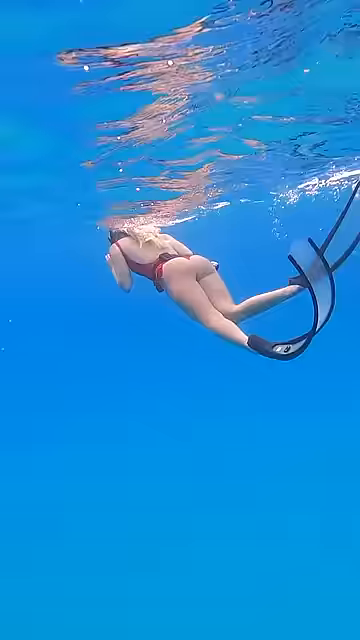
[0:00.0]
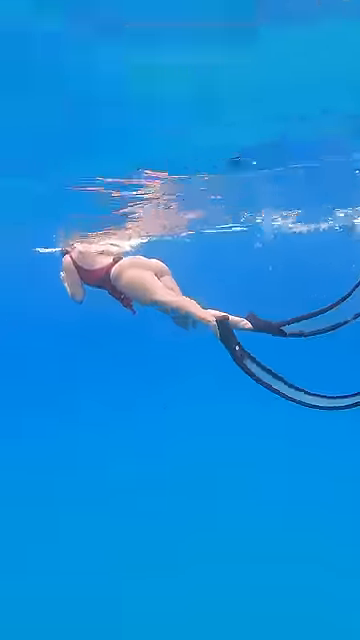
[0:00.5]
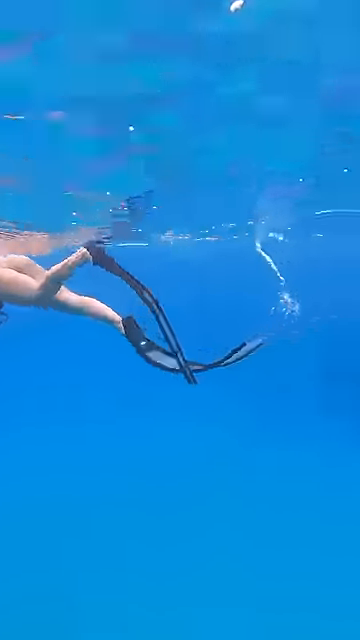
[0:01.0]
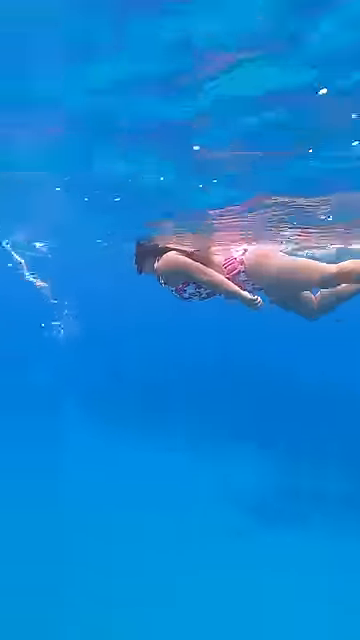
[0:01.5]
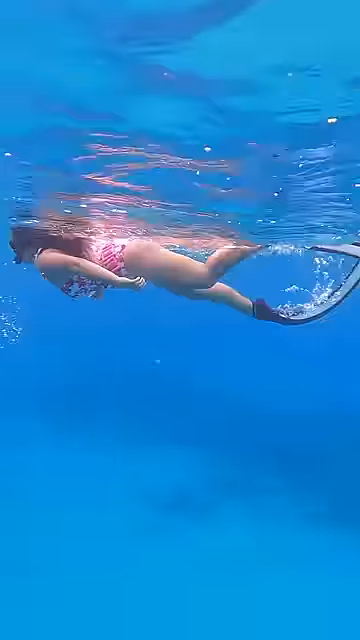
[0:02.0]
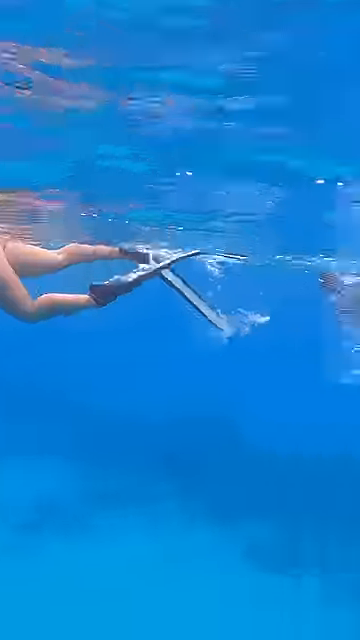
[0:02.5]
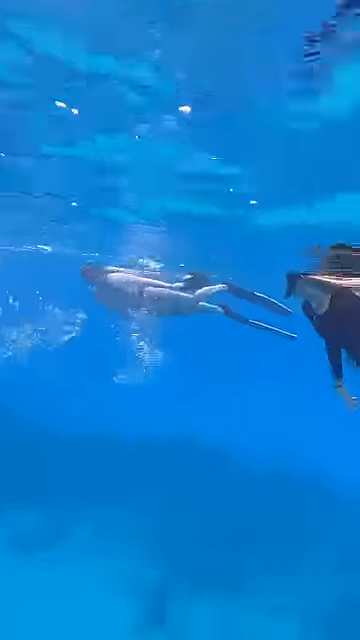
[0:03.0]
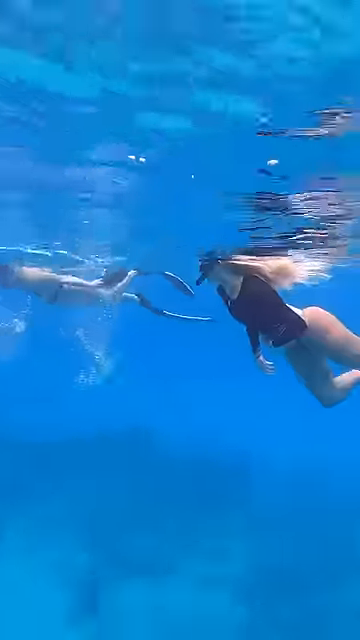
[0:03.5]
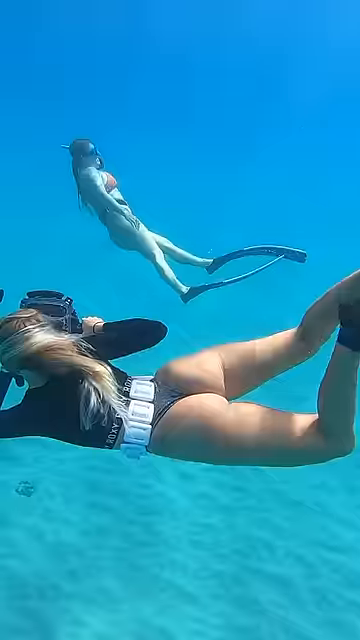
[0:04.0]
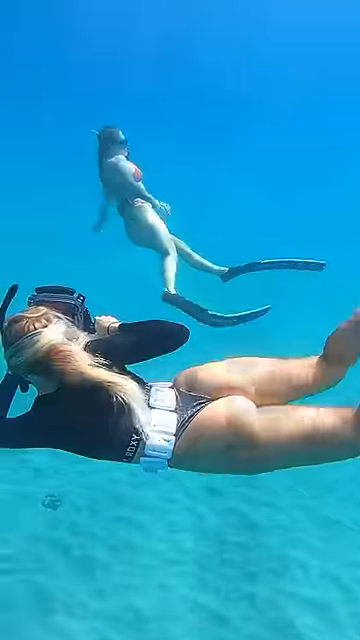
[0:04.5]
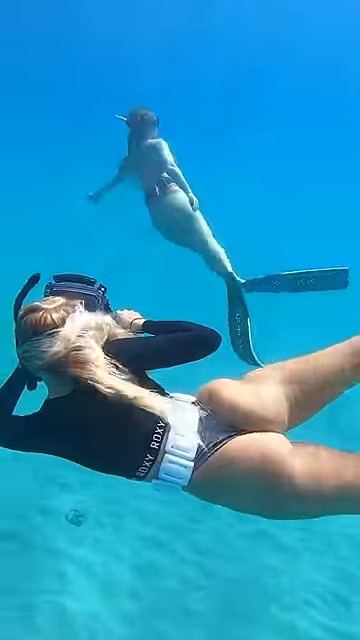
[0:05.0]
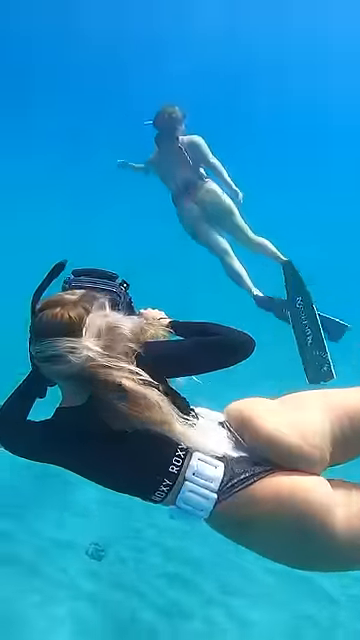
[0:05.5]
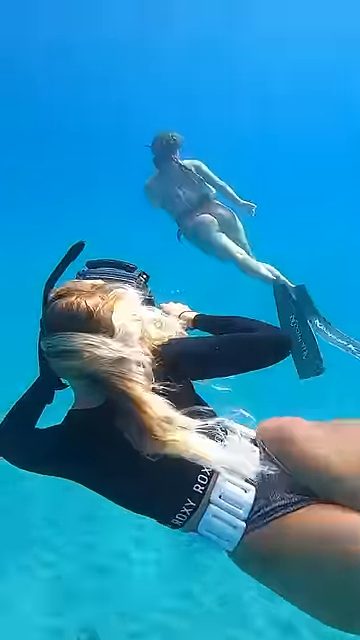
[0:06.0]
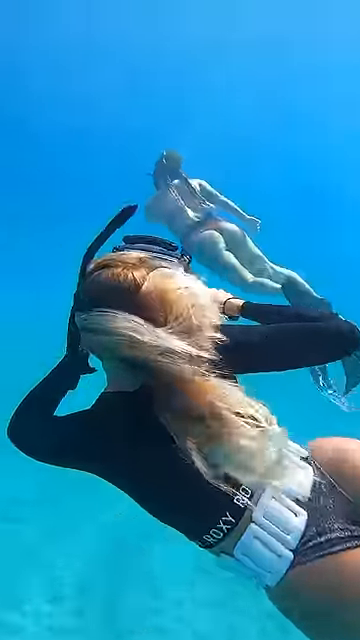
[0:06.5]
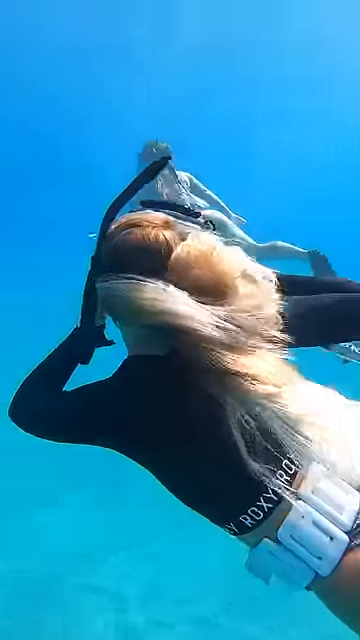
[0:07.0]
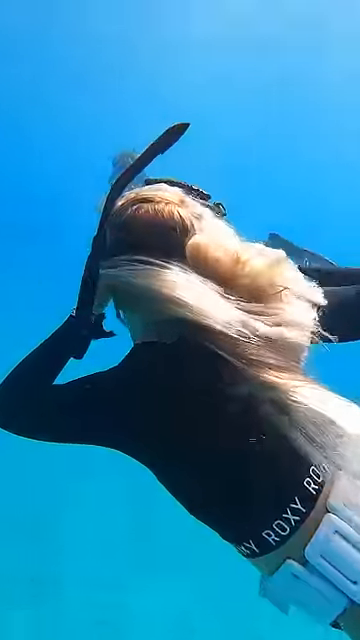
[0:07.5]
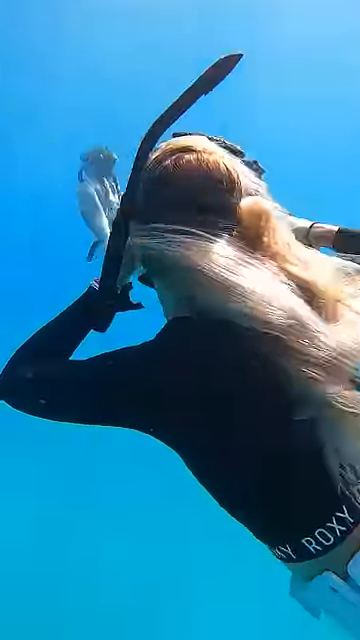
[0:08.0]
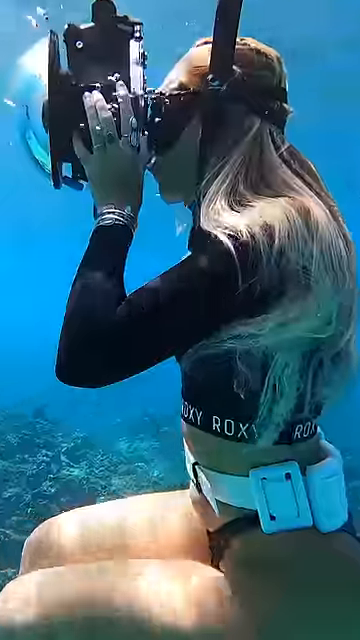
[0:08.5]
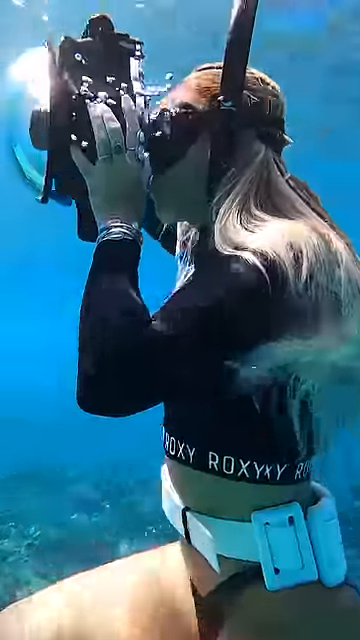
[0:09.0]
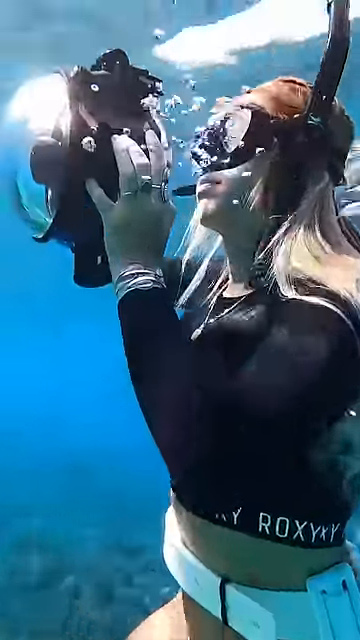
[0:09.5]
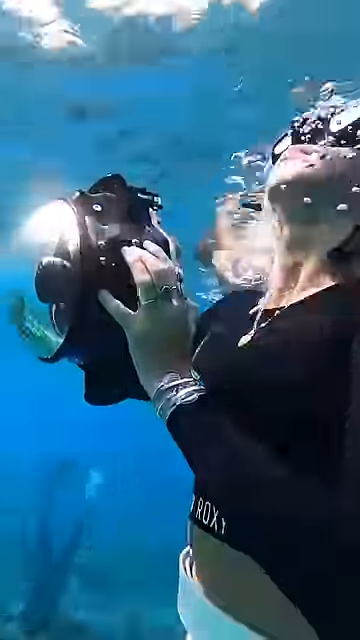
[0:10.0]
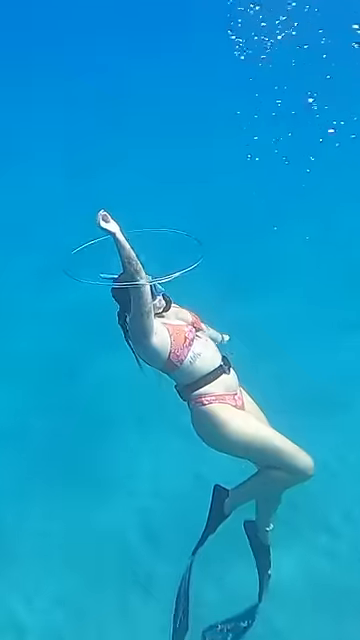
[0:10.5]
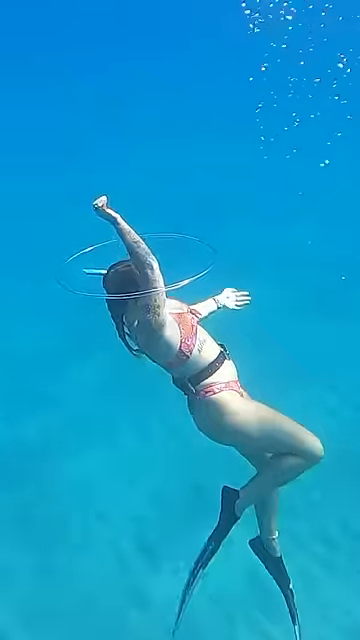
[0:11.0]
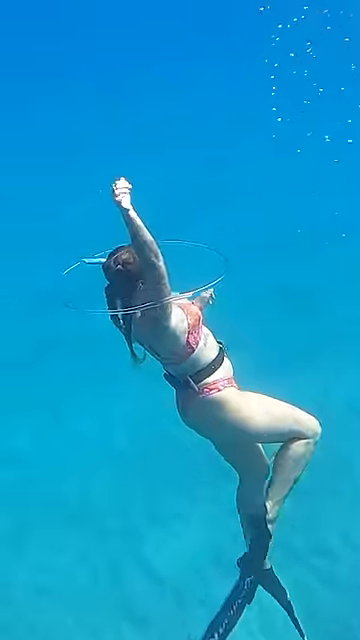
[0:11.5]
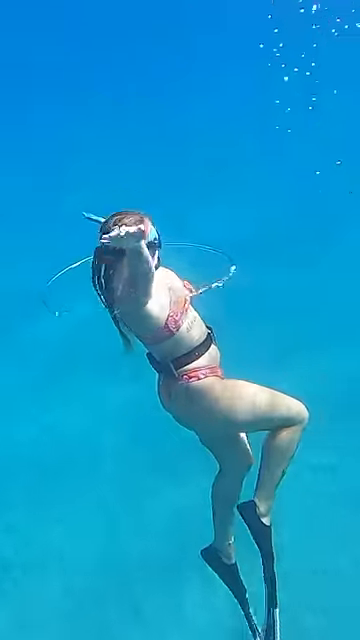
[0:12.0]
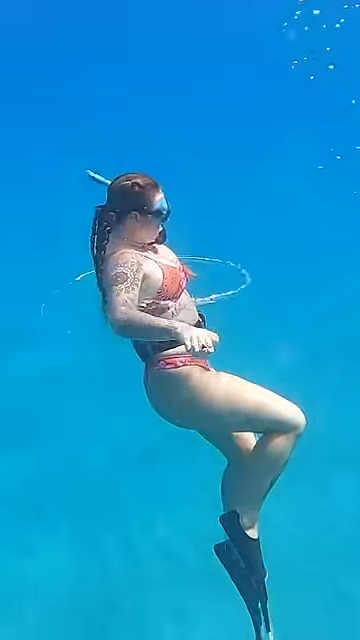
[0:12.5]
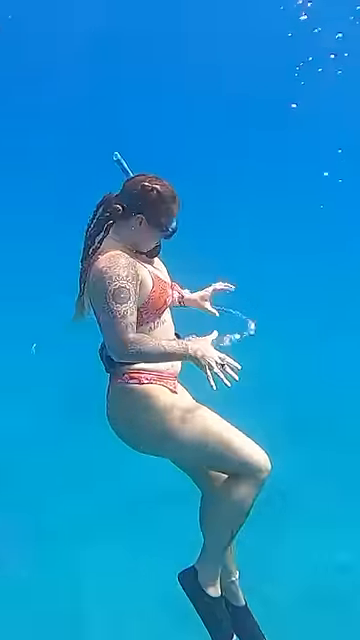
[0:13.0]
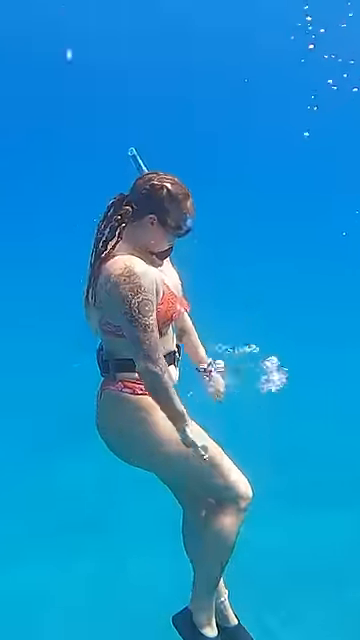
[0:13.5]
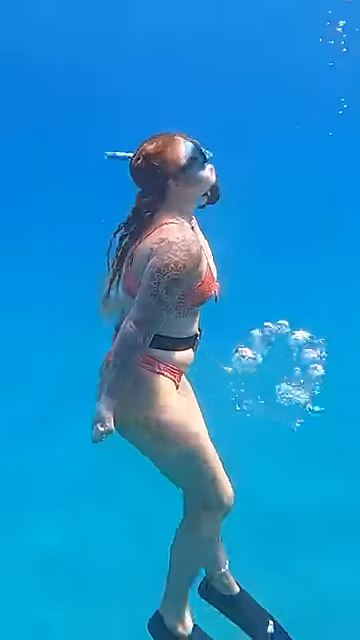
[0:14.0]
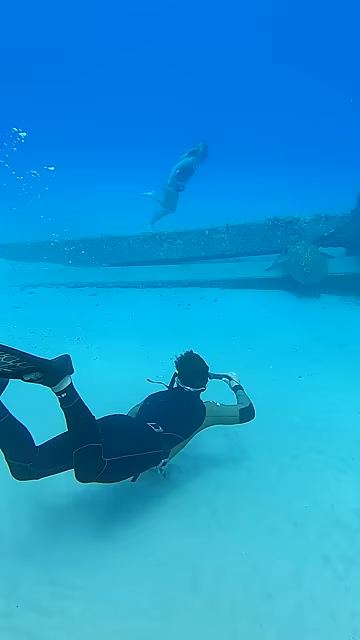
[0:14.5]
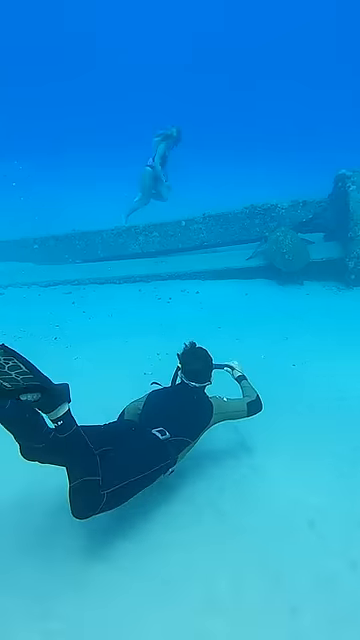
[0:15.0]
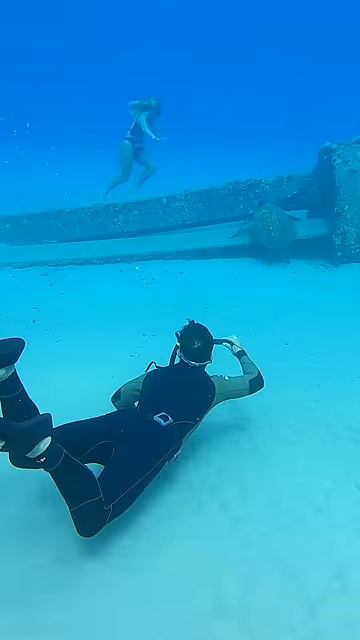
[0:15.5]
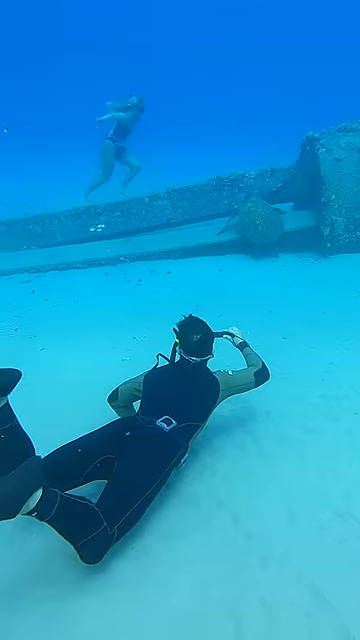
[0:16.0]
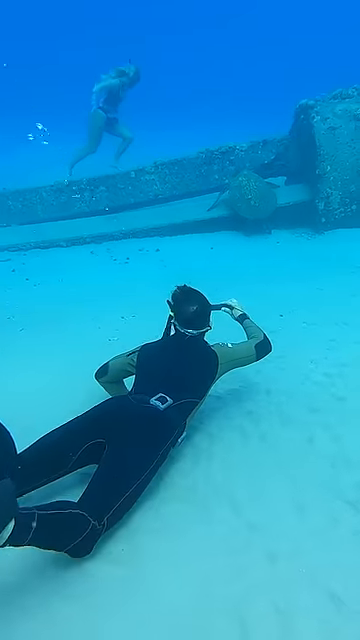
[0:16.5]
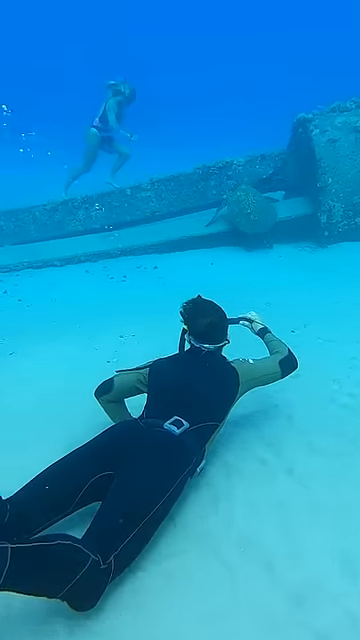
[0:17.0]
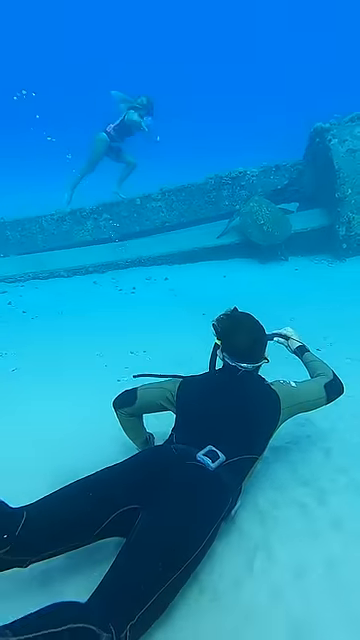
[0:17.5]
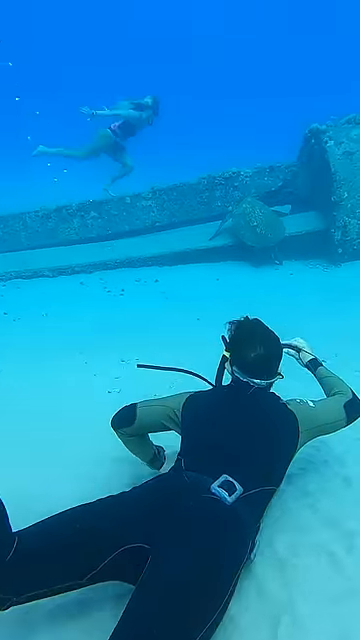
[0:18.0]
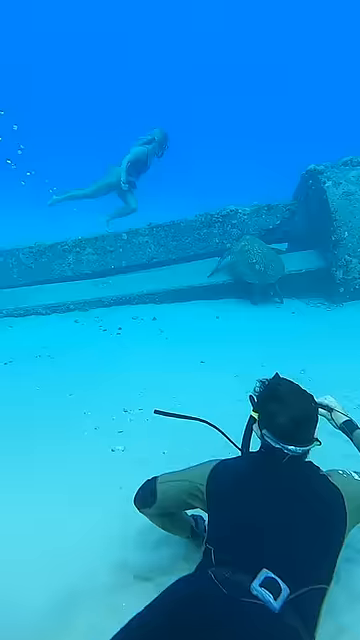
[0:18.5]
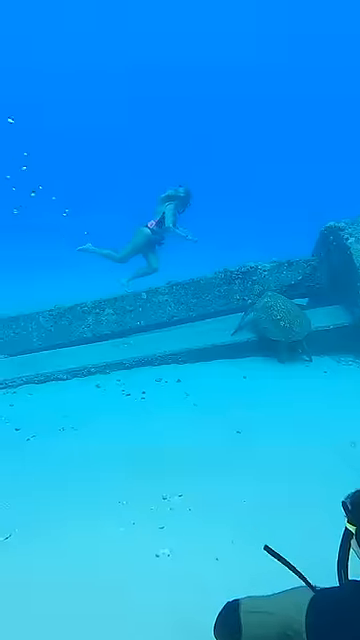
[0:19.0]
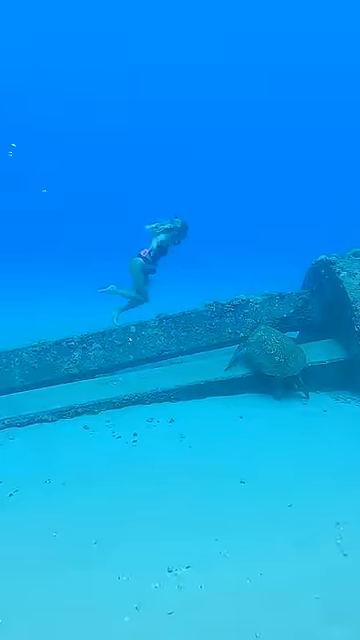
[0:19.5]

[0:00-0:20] People are diving underwater; most are women, but there is also one man. The video opens on the back of a woman diving. She wears very long flippers, blue or black, and a very small red swimsuit. The camera pans right over another woman swimming in a pink swimsuit and similar flippers, then pans over to two other women. One is in the background, so her swimsuit cannot really be seen. The other is closer and wears a dark shirt, possibly red or purple, with very small shorts. The shot cuts to a different view of two of the women: the one in the shirt is in the foreground, and the shirt can be seen to be black with a white trim on the bottom; her very small shorts barely look like they are there. The woman in the pink swimsuit is in the background. The woman in the shirt has something in front of her that might be a camera, but she is facing away, so it is hard to see. The view switches to a side view of her, holding a device with a clear dome that does look like it has a camera lens inside. It switches back to the swimmer in pink, who swims through a bubble ring, grabs it, and breaks it into smaller bubbles. It then cuts to a woman slowly walking on a large metal piece underwater, and a man in a sleeveless dark shirt and black pants swims close to the ground, looking at her.